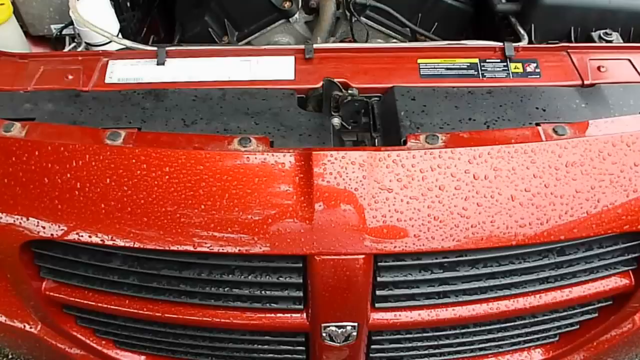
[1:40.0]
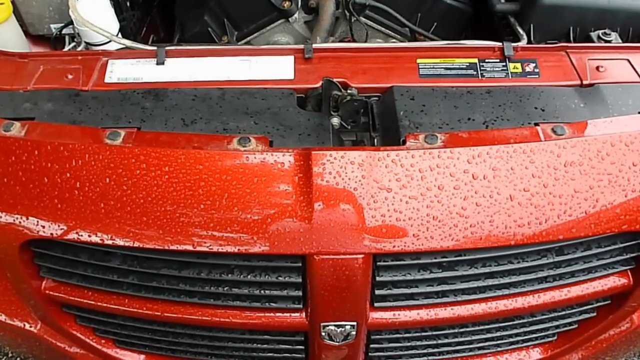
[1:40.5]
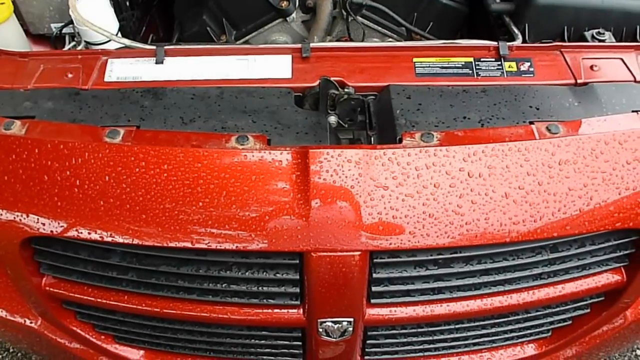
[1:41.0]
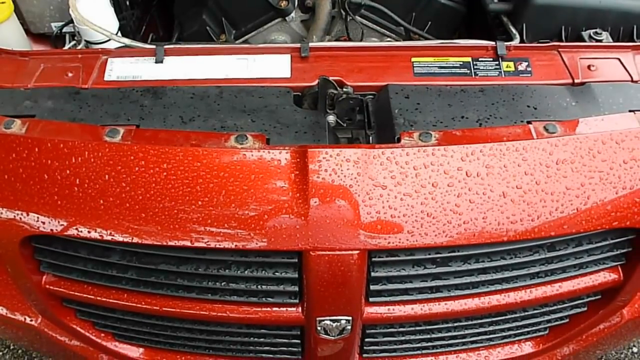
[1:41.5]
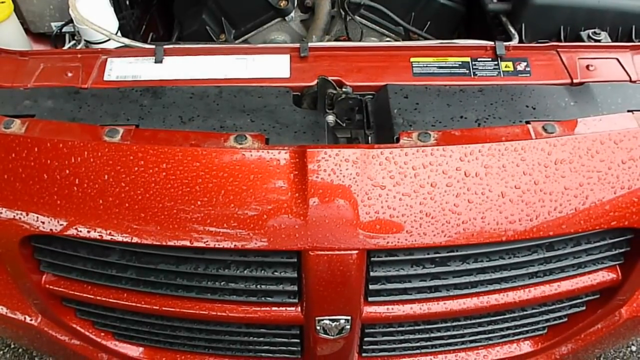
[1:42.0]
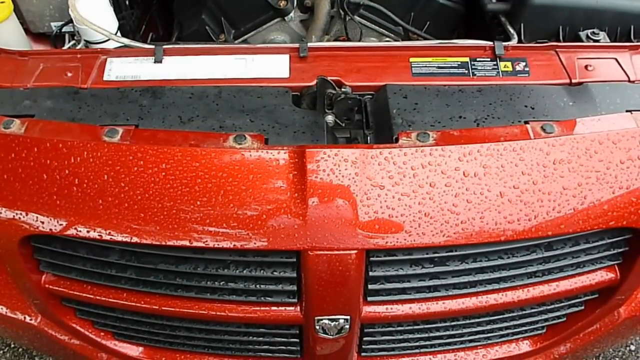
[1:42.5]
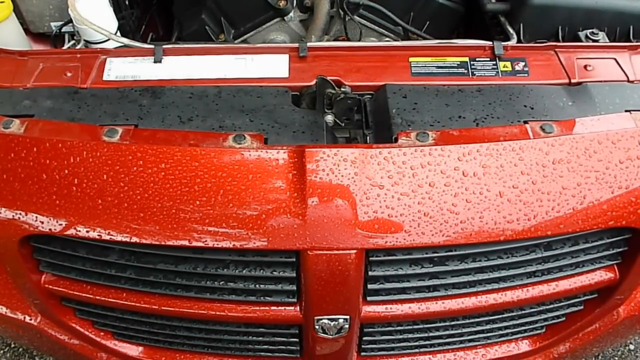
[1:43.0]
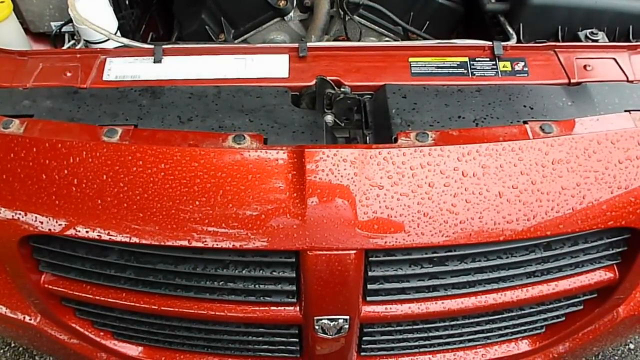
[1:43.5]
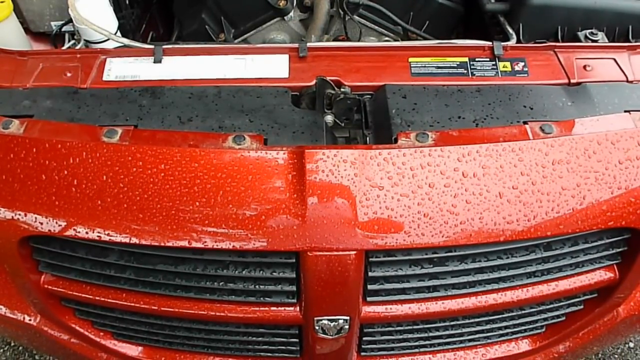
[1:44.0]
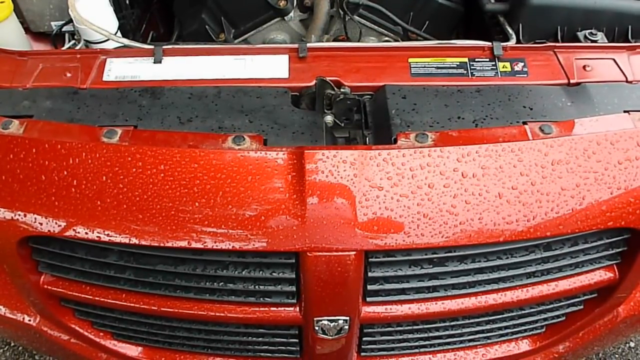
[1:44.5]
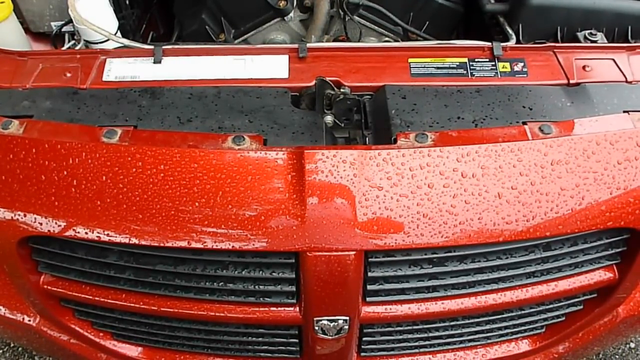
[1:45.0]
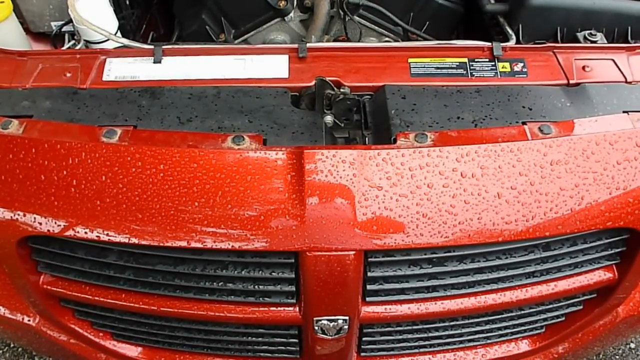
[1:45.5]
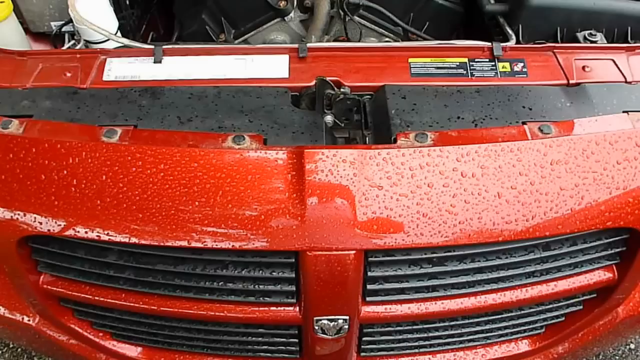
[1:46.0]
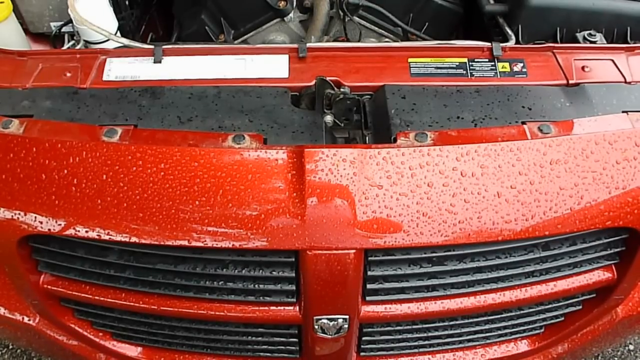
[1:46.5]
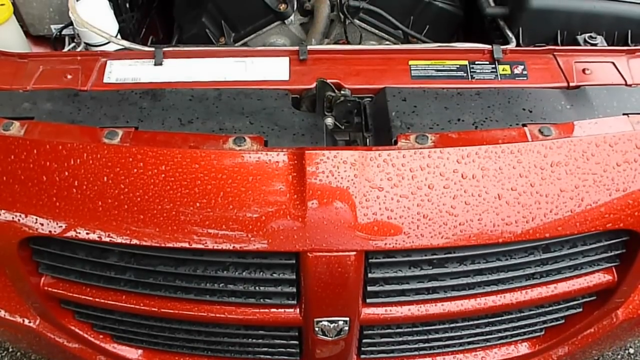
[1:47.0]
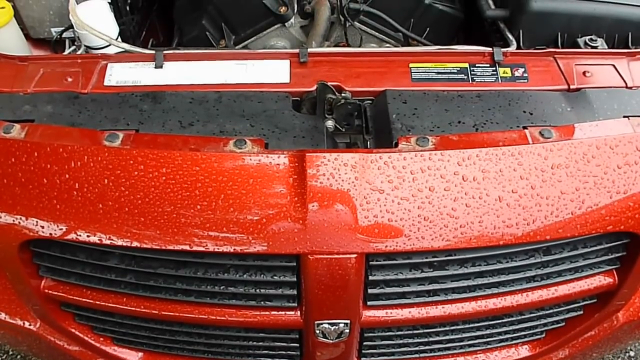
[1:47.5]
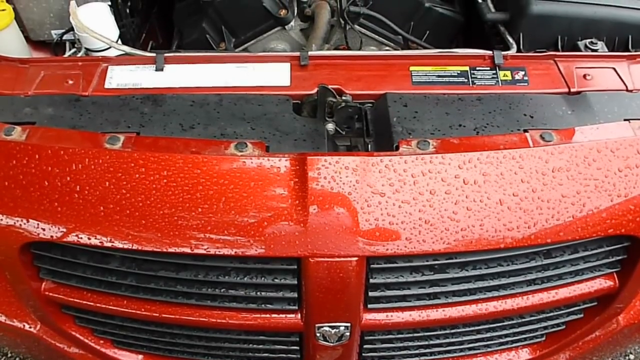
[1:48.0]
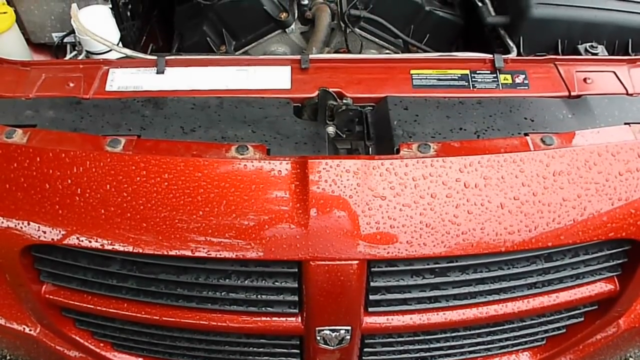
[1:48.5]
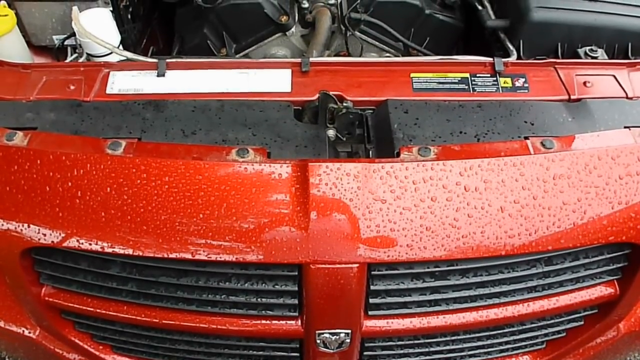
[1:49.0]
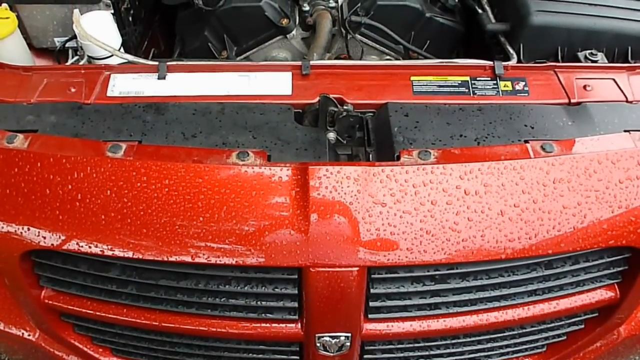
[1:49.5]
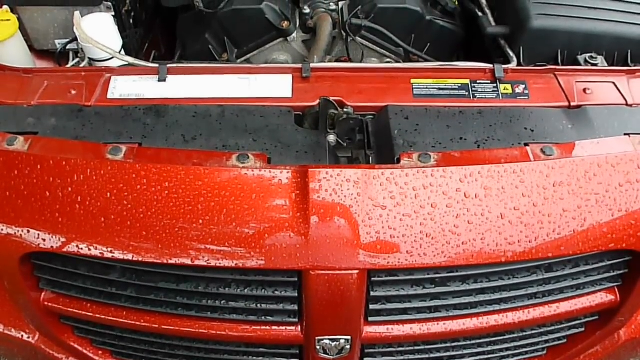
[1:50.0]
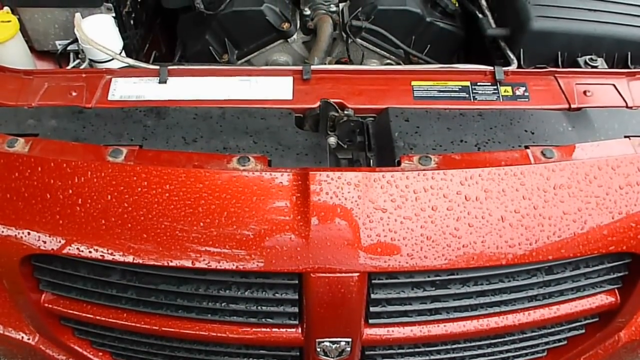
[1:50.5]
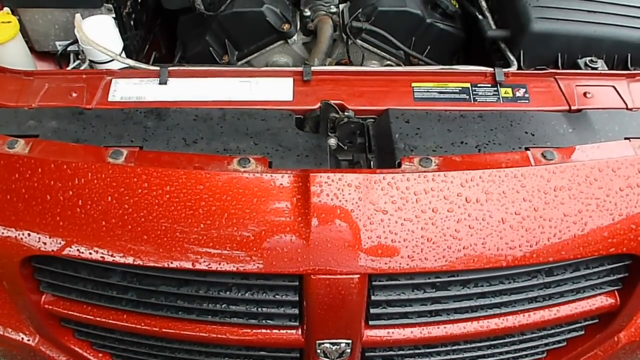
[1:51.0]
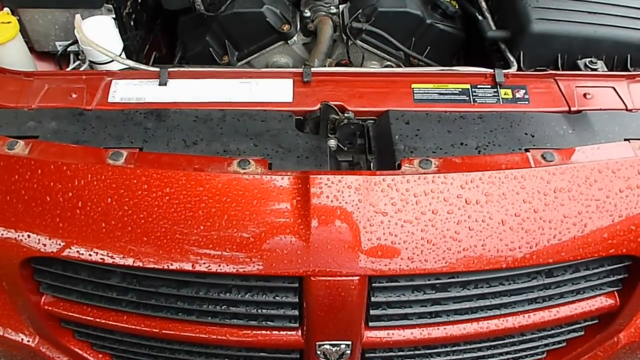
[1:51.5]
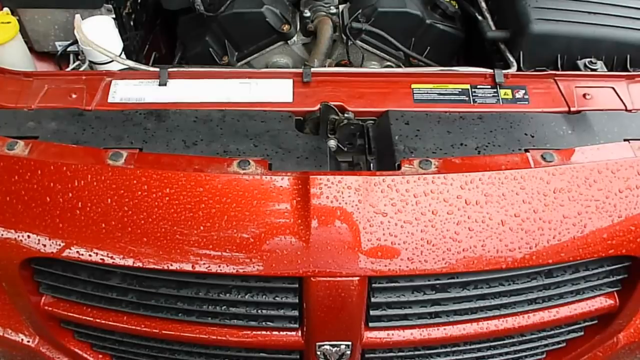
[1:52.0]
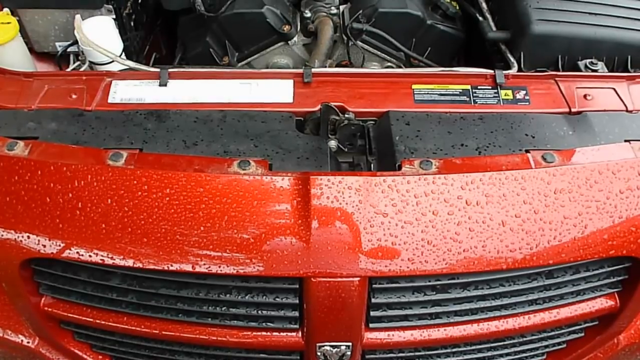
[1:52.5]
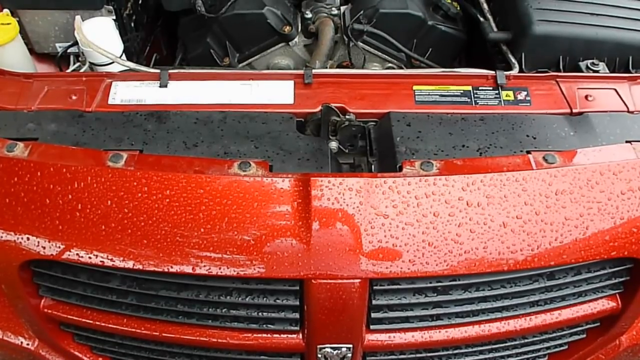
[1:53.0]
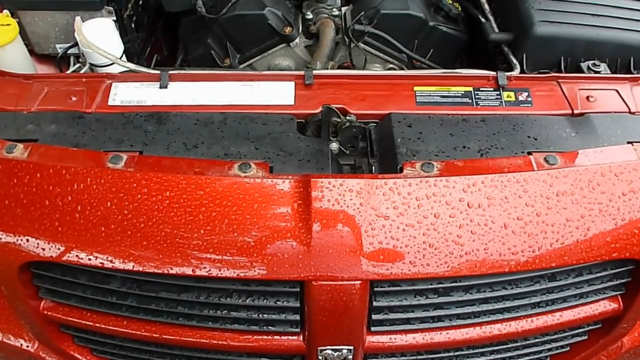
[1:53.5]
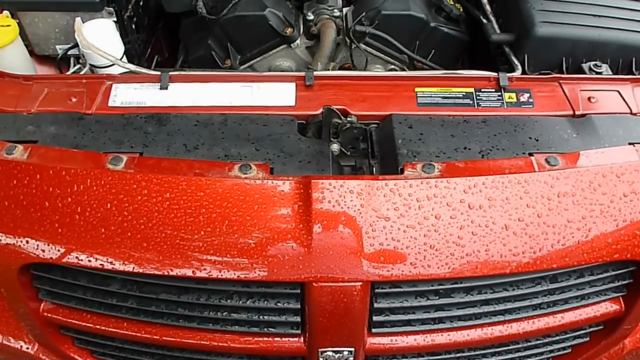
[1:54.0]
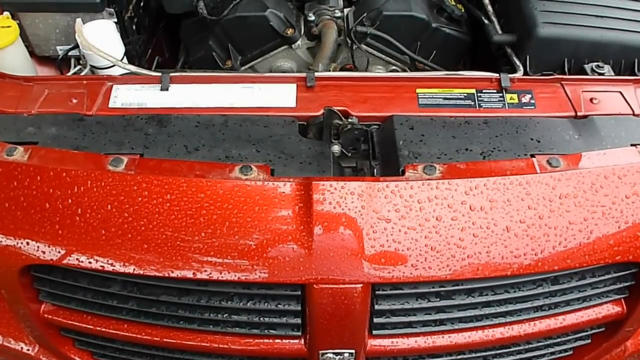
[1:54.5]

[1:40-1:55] From a few feet back, the man records the front of the vehicle and the very front of the engine compartment. He barely moves and holds the handheld camera quite still, with only a little movement, so the shot is almost like a photograph. The front of the grille, the Dodge logo, the front edge where the hood snaps down, the panel he had removed and a little of the engine compartment are visible, in a downward shot at roughly a 45 or even 60-degree angle.